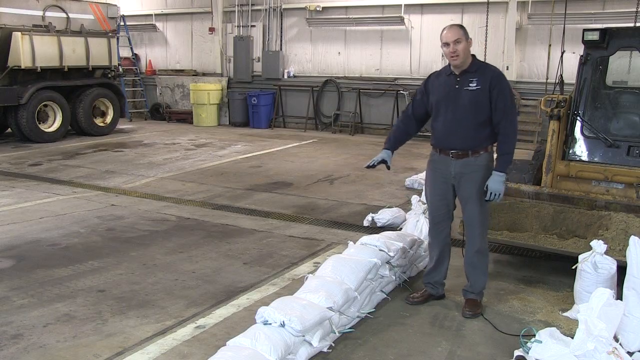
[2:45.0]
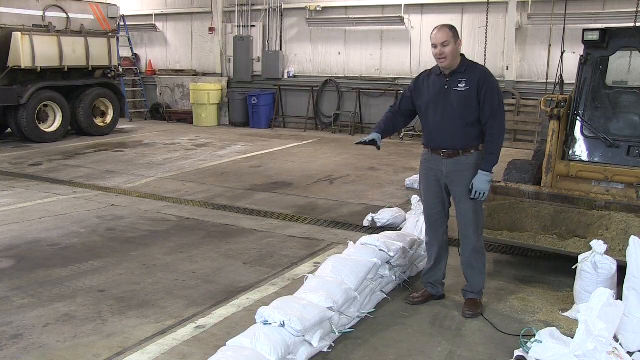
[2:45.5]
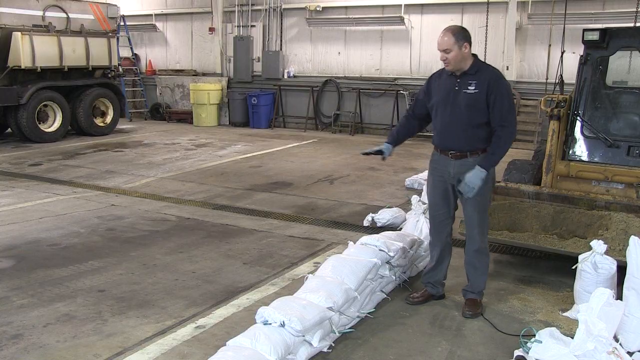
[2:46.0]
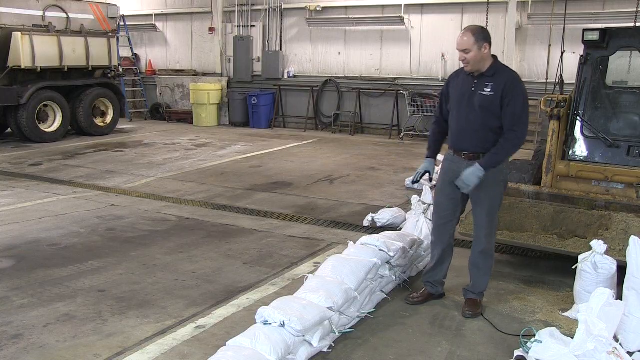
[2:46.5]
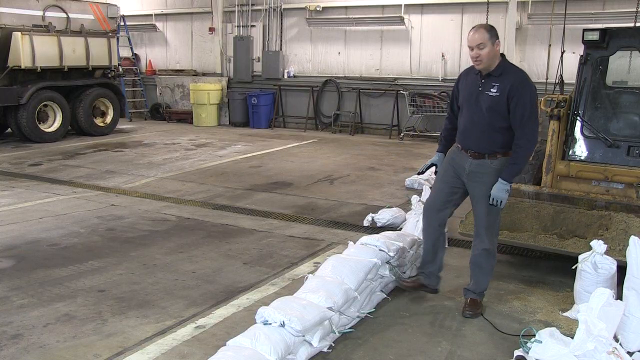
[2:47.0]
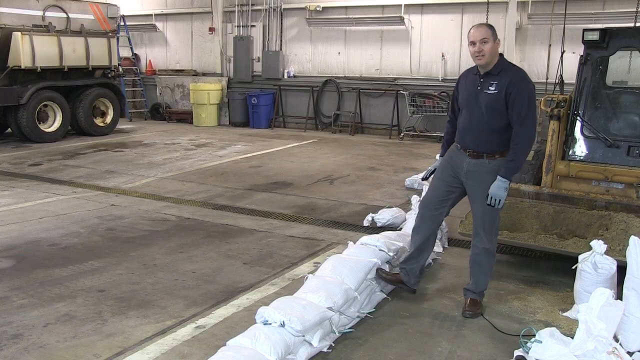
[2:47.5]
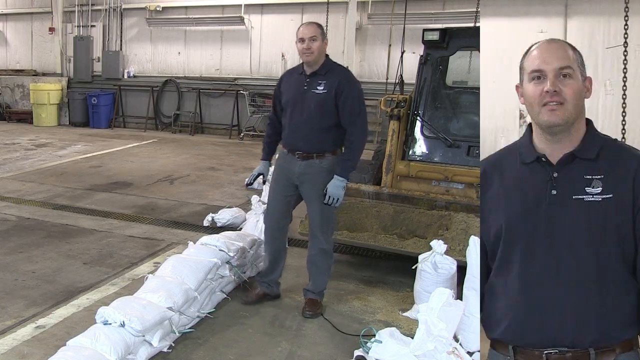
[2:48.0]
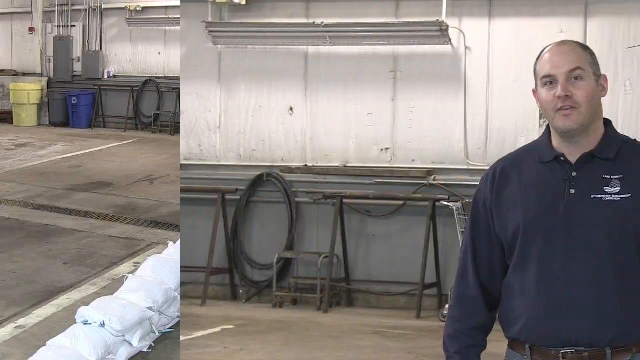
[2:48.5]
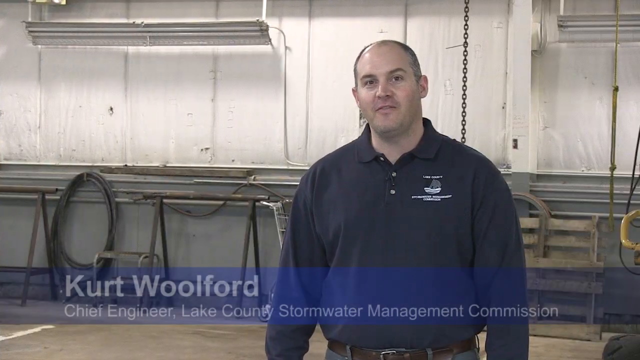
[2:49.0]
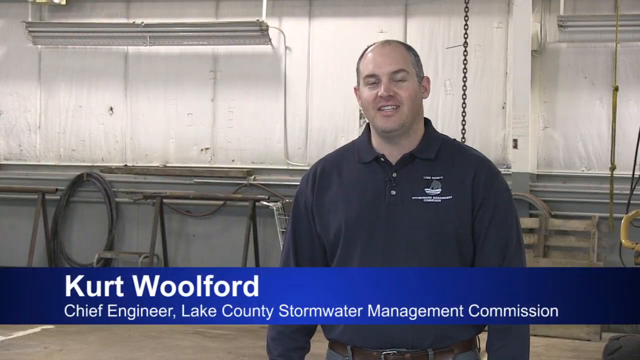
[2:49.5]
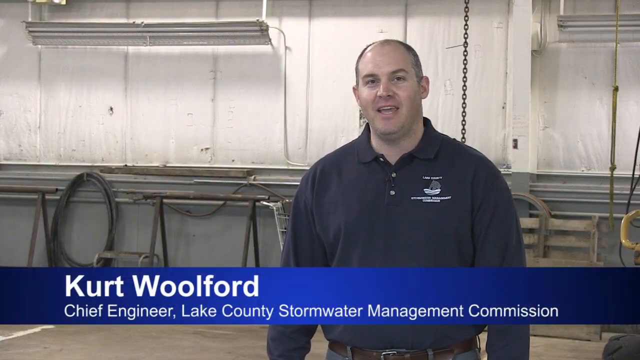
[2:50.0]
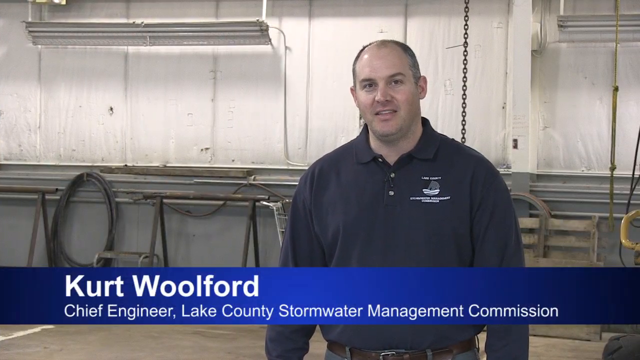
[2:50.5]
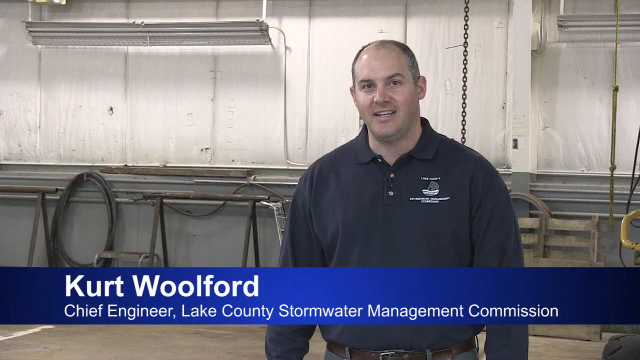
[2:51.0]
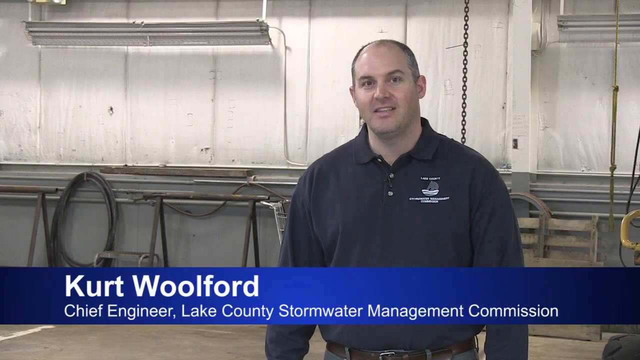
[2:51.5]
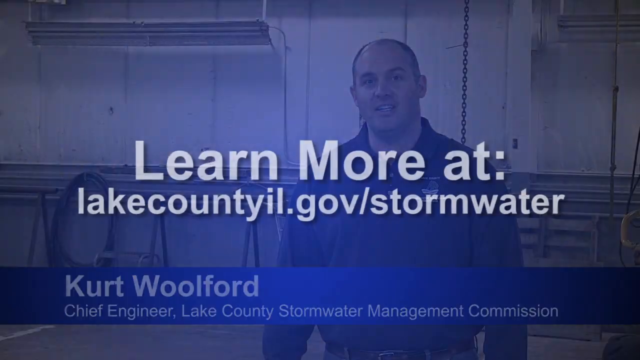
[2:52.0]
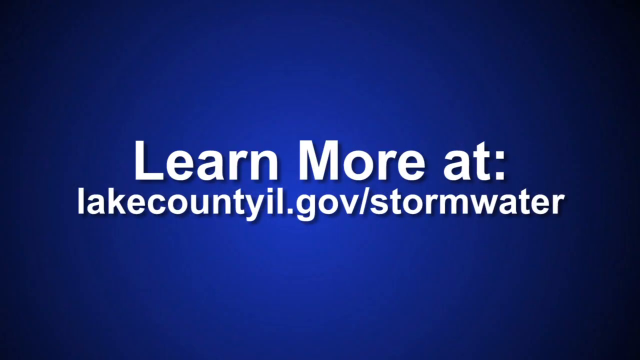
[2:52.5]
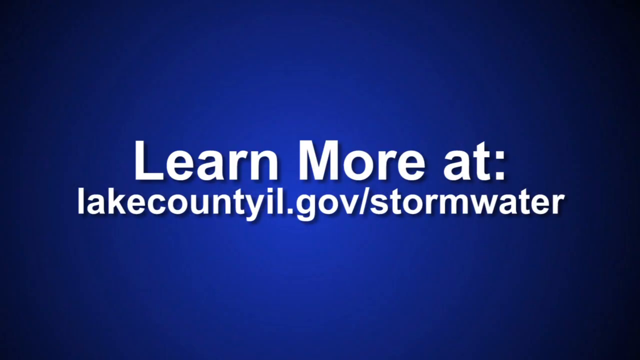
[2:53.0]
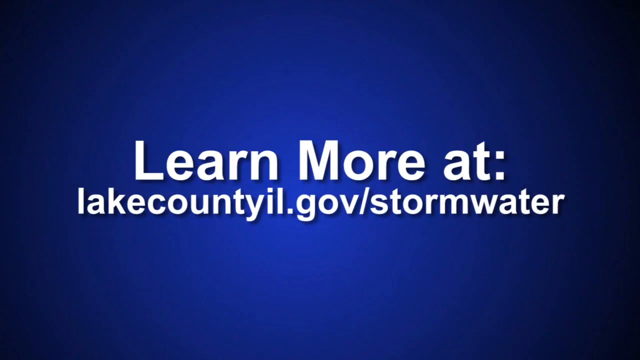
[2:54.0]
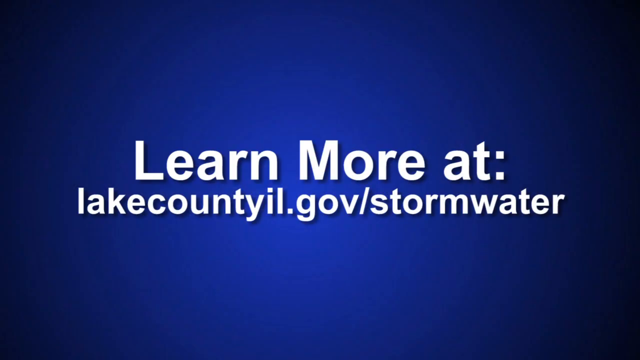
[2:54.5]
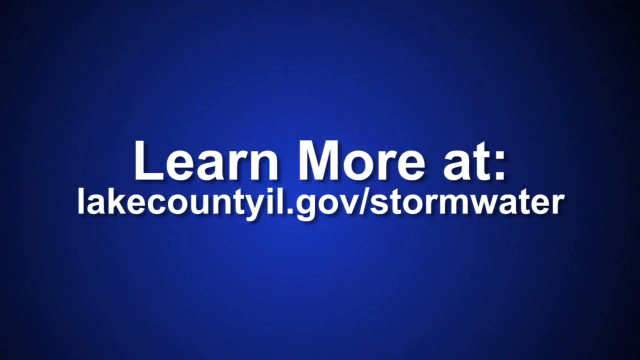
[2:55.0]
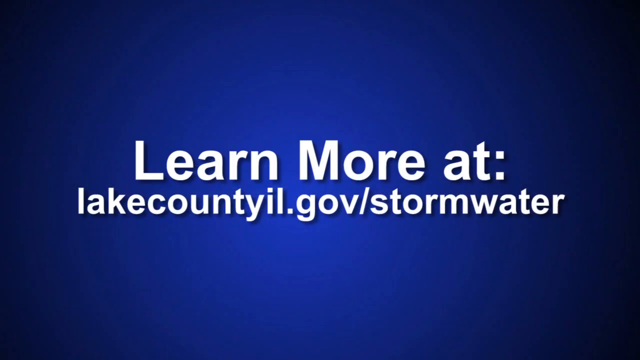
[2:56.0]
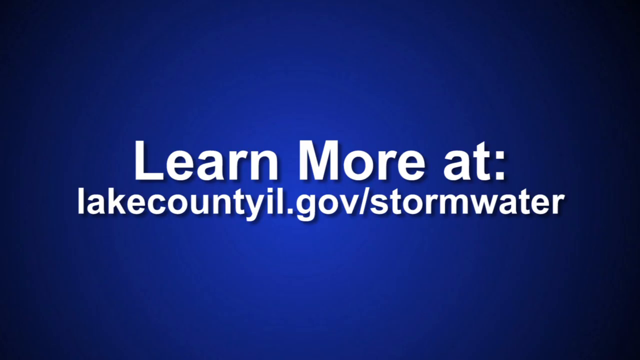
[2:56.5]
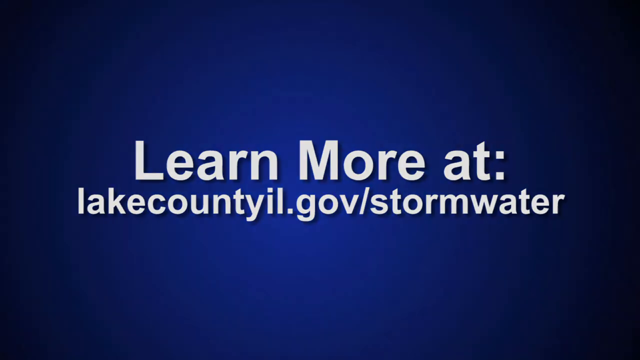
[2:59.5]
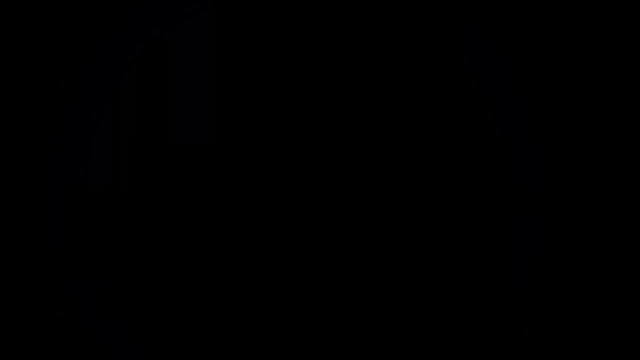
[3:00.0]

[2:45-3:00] The speaker continues to gesture at the growing sandbag wall inside the warehouse. The video then switches to a headshot of the speaker as he concludes, speaking. It finally switches to a blue slide with white text that says "if you want to learn more information go to lakecountyl.gov/stormwater to learn more".